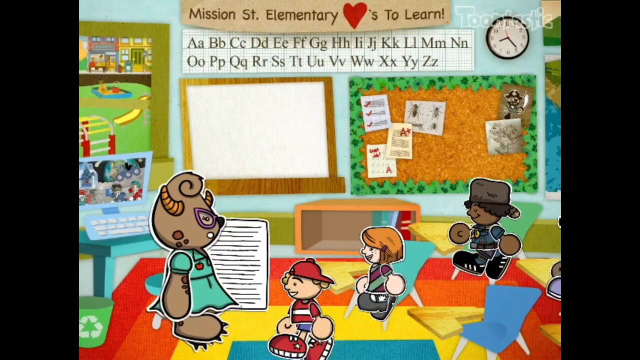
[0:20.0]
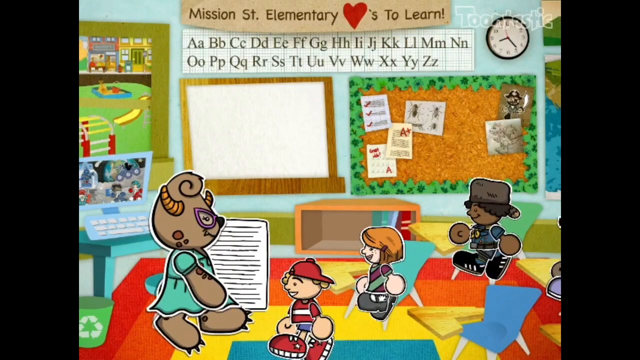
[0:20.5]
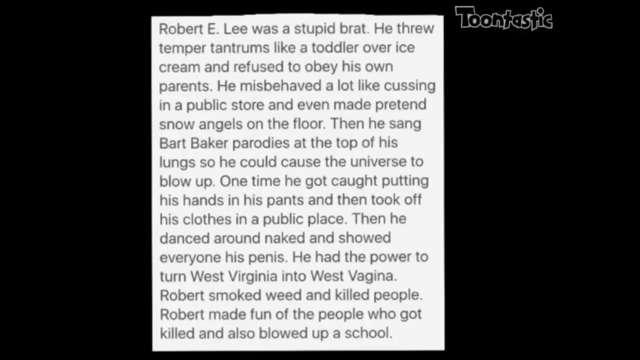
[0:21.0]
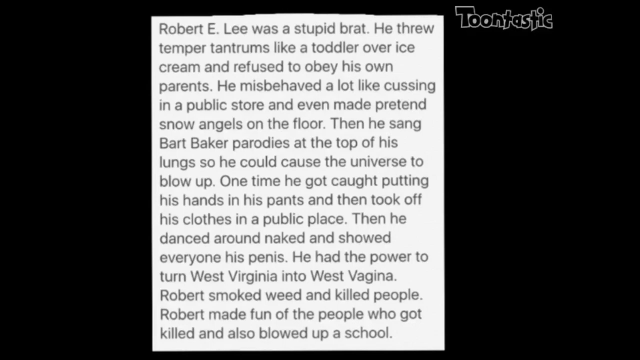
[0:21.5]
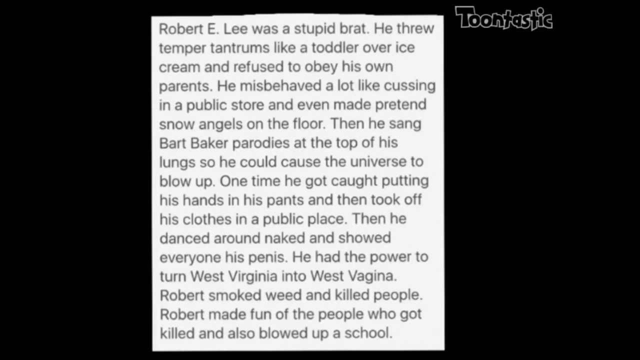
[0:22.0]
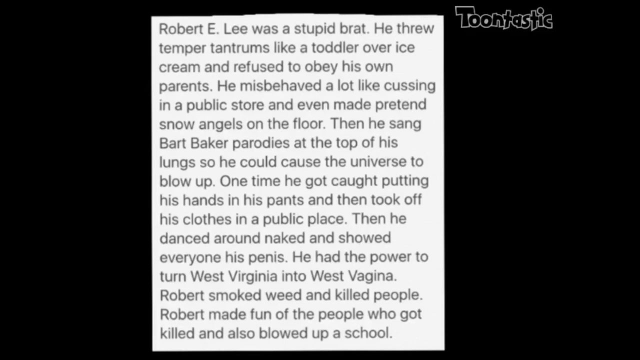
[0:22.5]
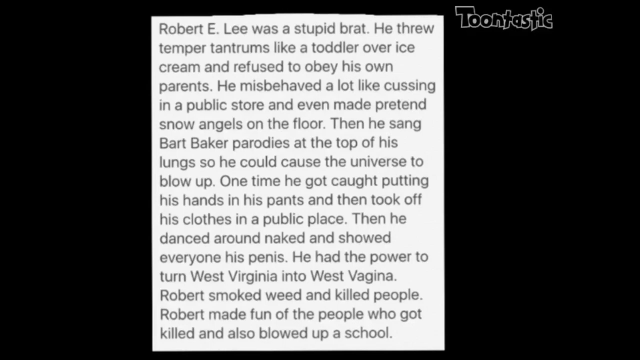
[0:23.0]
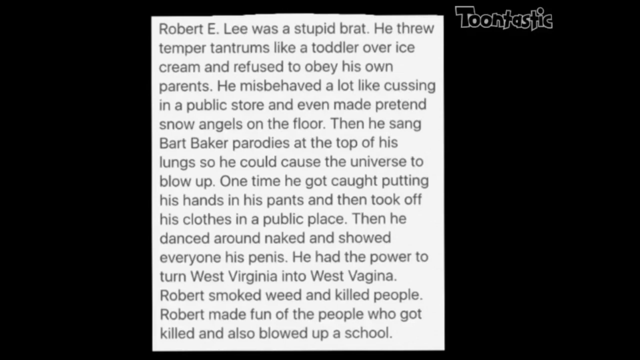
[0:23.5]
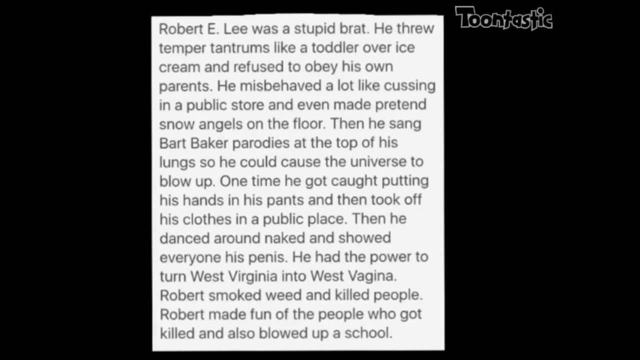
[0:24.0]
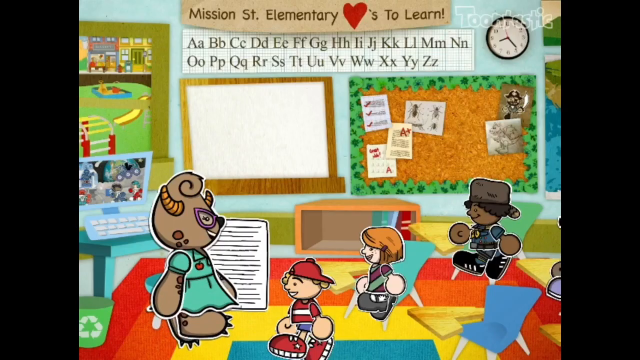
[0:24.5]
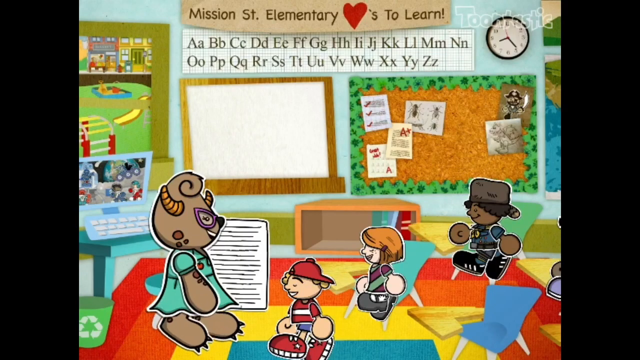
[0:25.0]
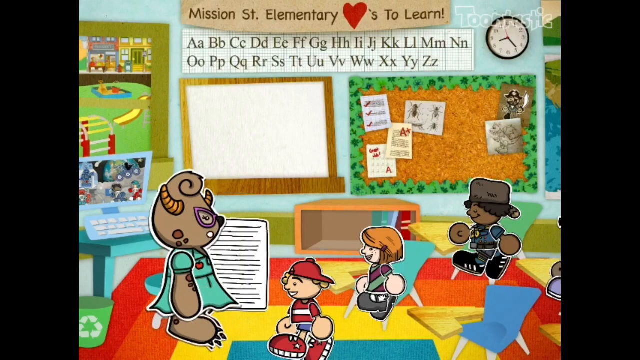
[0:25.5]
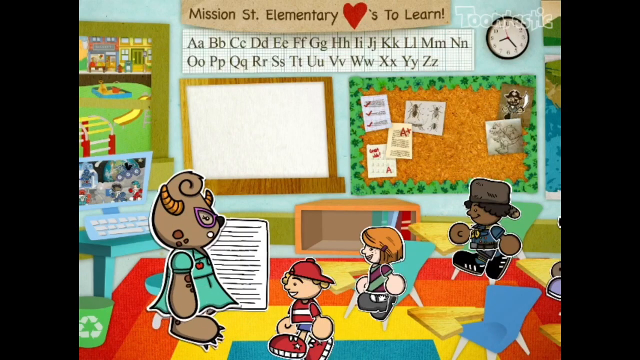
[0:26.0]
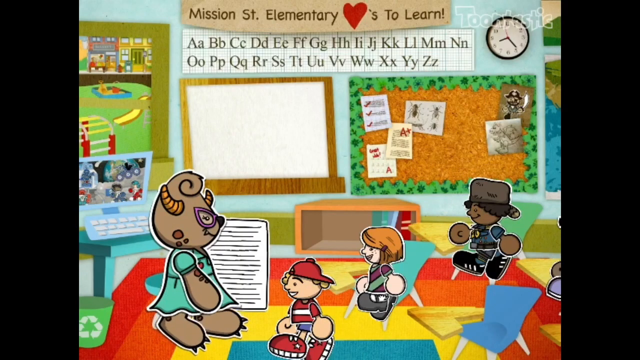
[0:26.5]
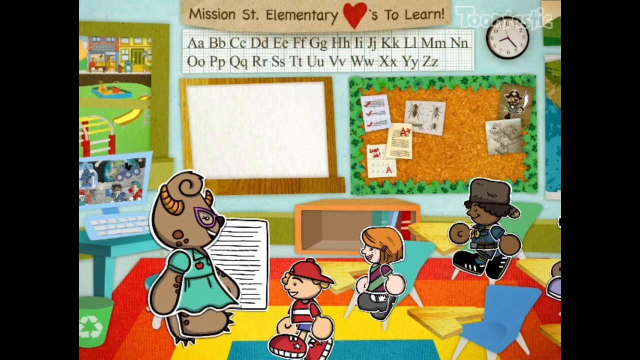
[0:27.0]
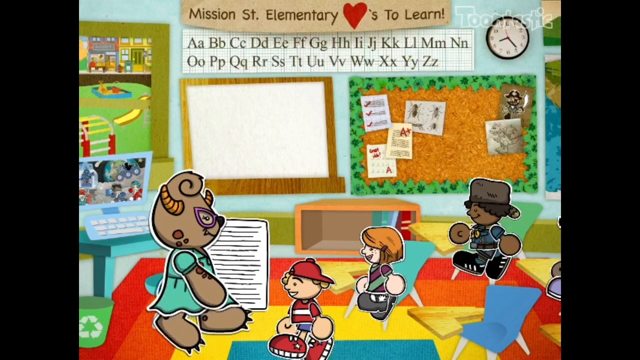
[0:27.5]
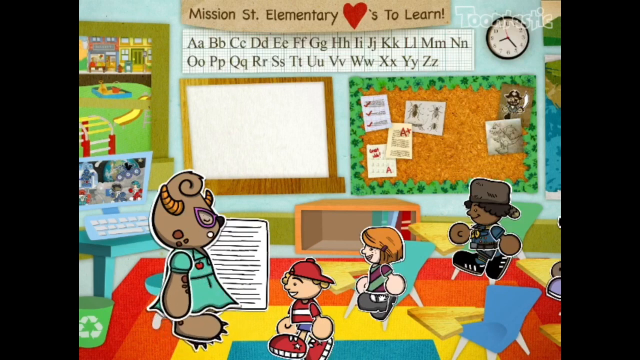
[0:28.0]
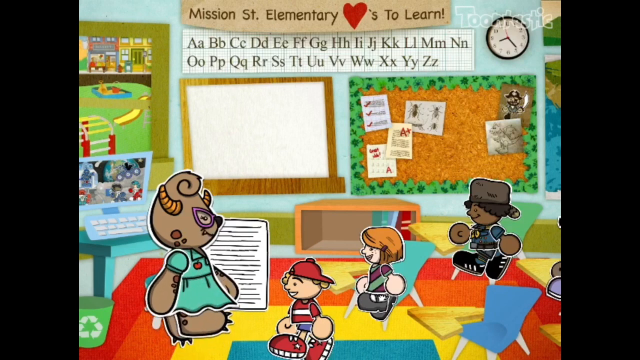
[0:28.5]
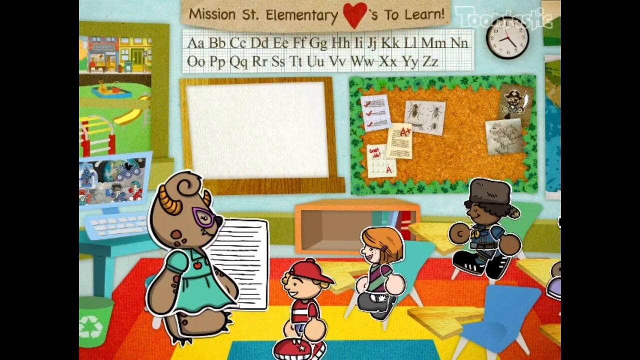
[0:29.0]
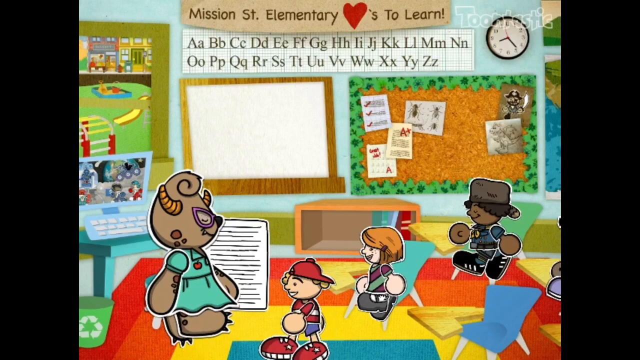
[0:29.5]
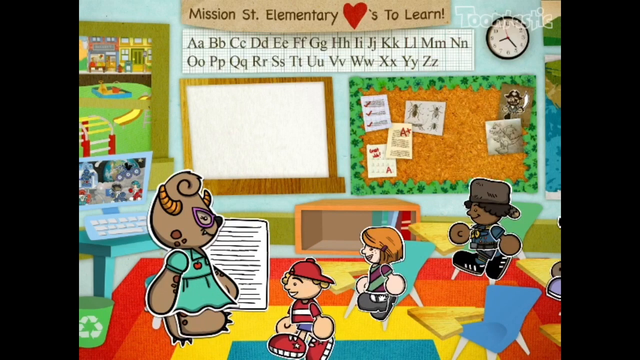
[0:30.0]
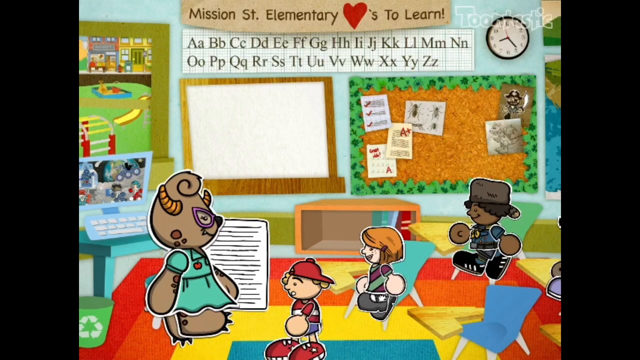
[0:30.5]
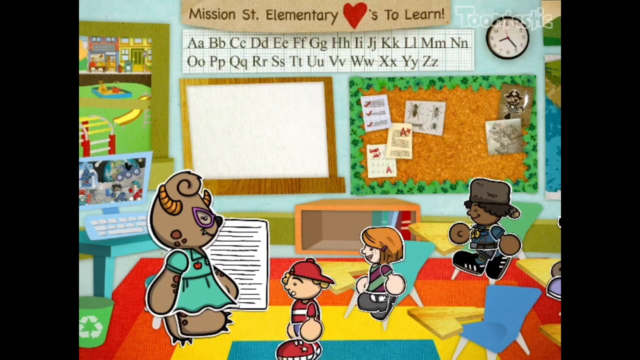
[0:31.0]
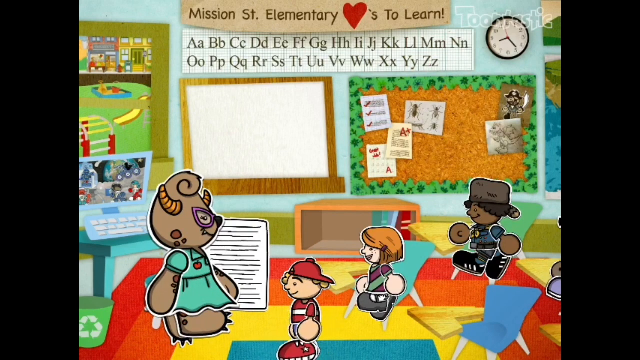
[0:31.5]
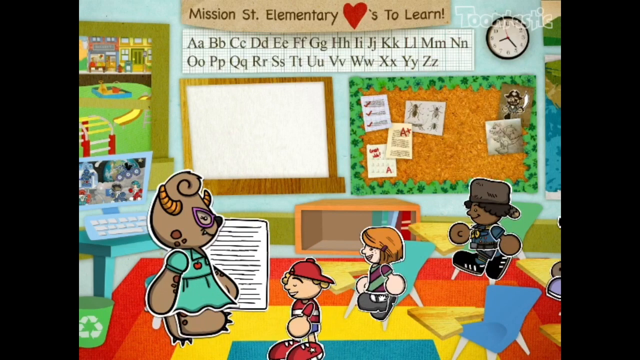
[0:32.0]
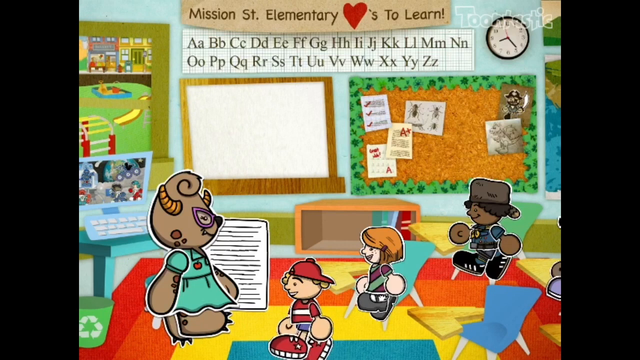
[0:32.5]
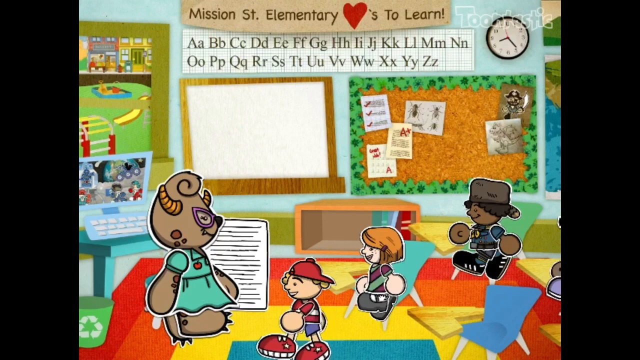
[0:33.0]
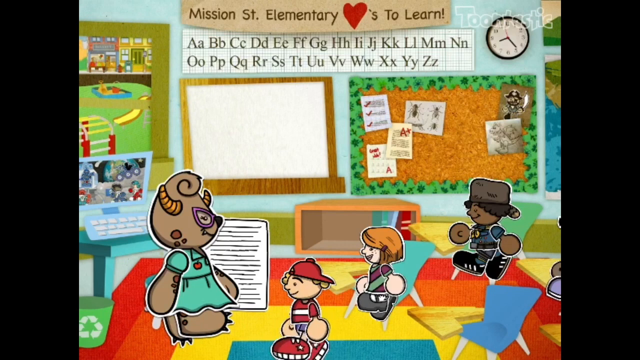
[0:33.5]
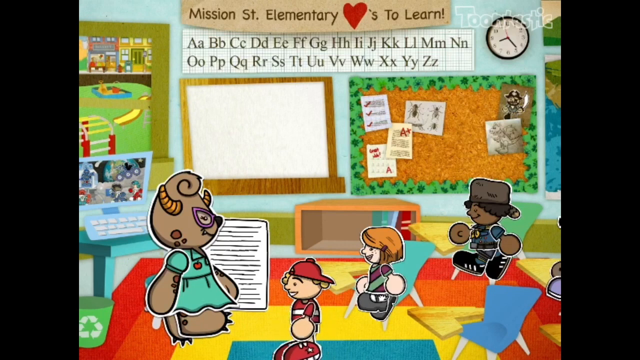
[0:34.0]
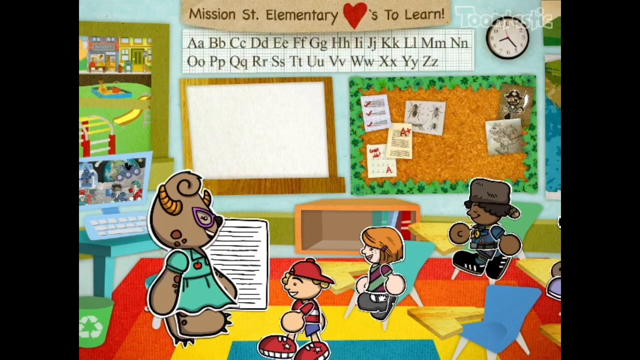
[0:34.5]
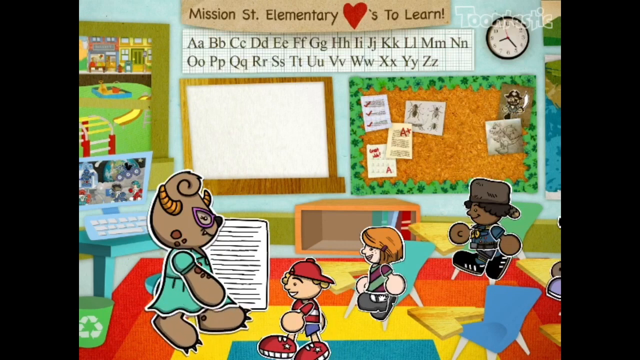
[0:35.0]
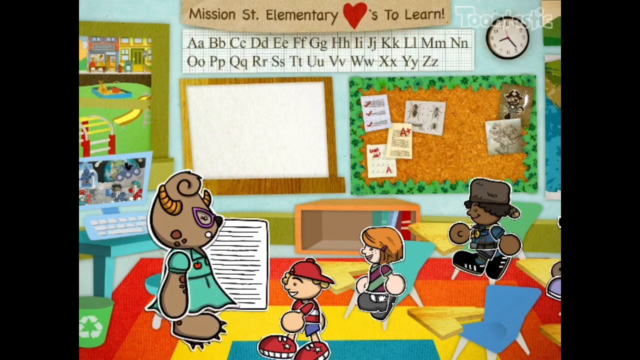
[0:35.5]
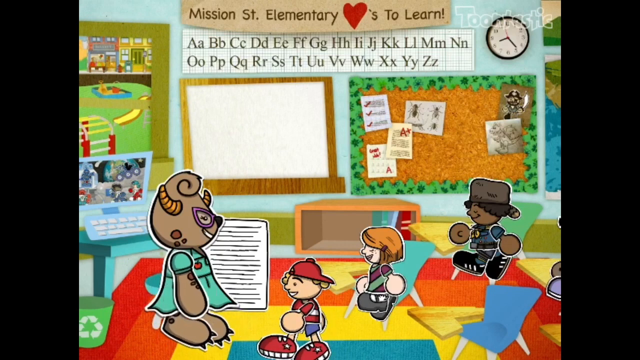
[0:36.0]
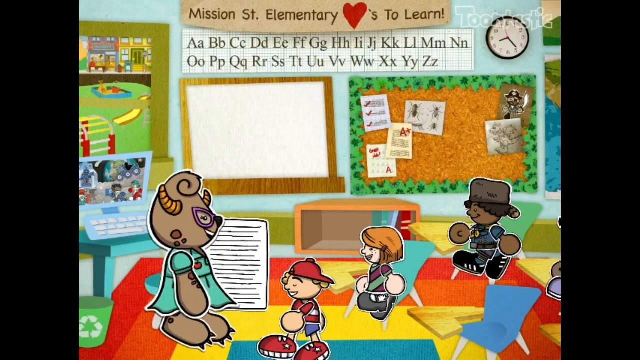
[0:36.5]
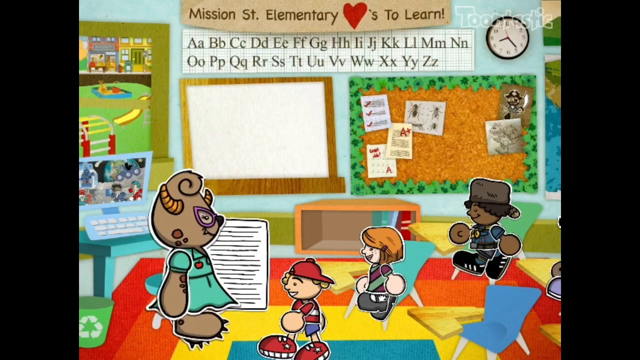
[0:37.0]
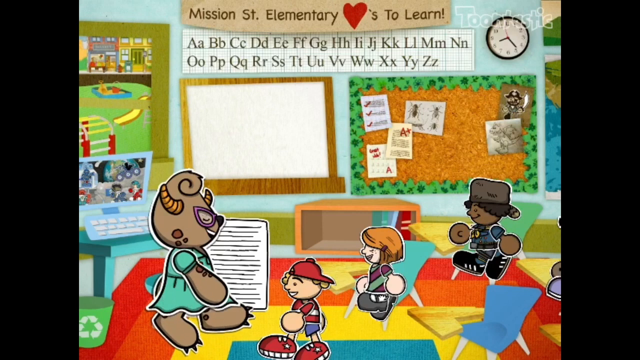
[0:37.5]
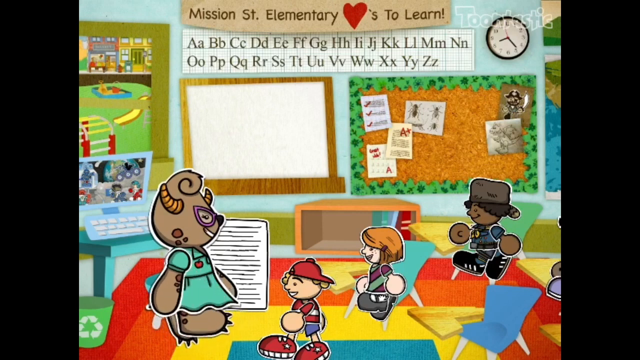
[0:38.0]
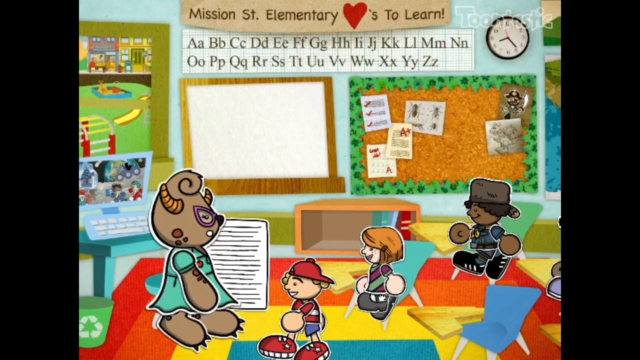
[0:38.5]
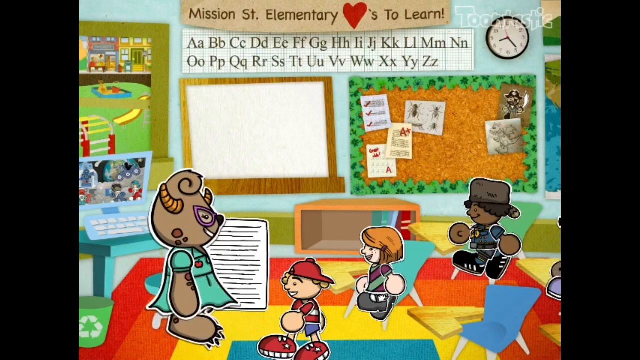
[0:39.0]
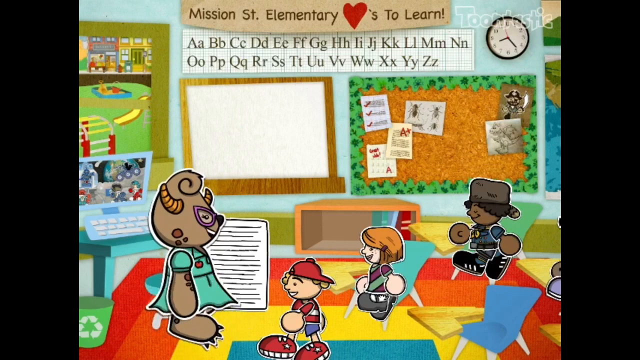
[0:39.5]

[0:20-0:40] White text at the bottom reads "created for comedy purposes only." Two children are on the front of the image. The one on the left appears to be a boy wearing a red cap tilted toward his left side, a red striped shirt with white in the center, blue shorts, and large red shoes. He has two large circular hands and waves his right hand. Next to him is what appears to be a Caucasian young girl with orange hair and freckles, wearing what appears to be a V-pattern dress in green and purple, round black shoes, and white socks; her right hand is sticking up. Behind them appears to be a group of houses. The scene then changes to what appears to be an elementary school, with white text at the top reading "Mission Saint Elementary loves to learn" and ABCs along the top. What appears to be an animal holds a document. The two children from the start appear along with a third child, who appears to be African American, wearing a raccoon hat and black sneakers.